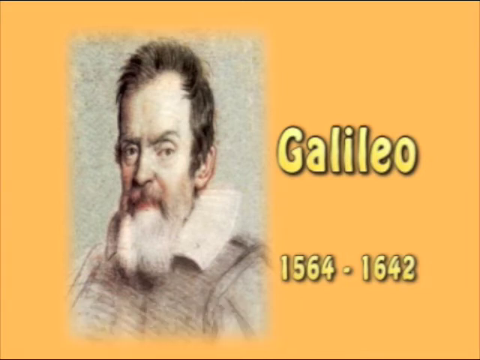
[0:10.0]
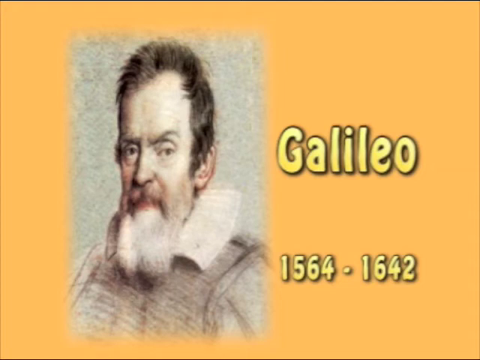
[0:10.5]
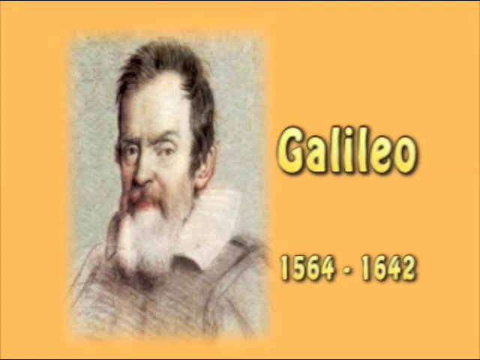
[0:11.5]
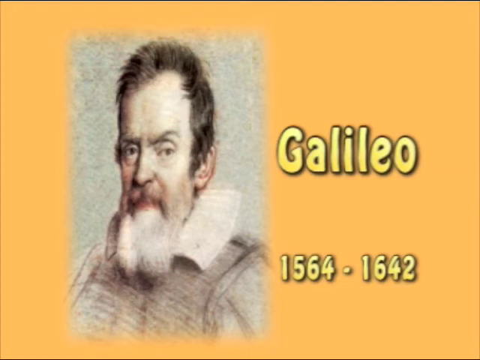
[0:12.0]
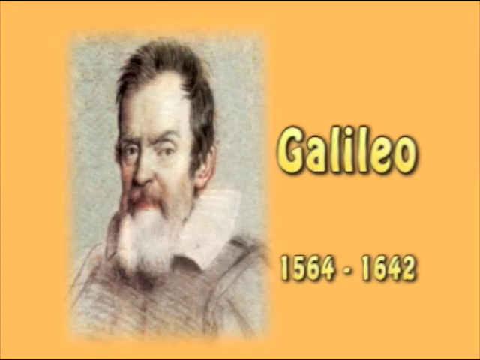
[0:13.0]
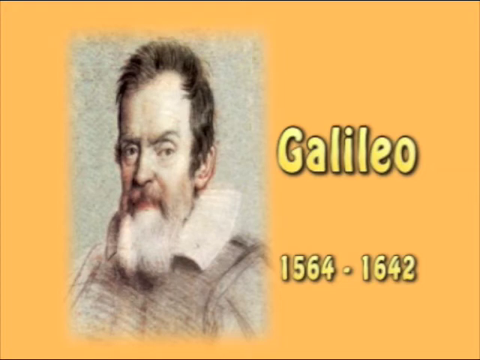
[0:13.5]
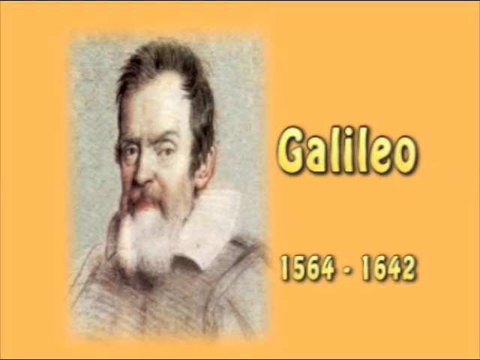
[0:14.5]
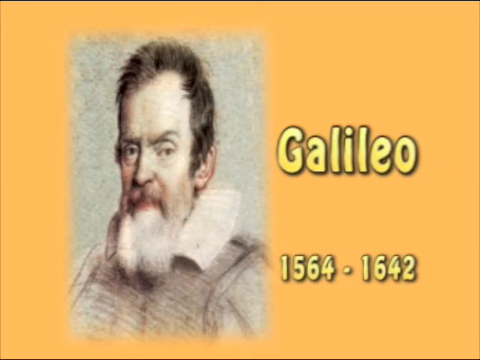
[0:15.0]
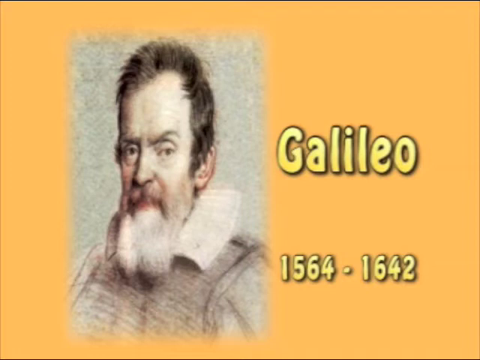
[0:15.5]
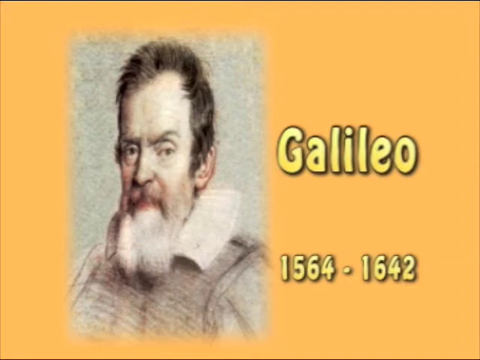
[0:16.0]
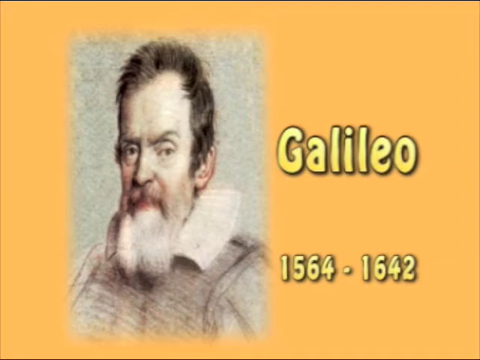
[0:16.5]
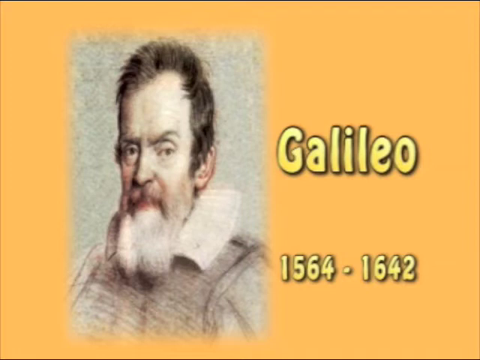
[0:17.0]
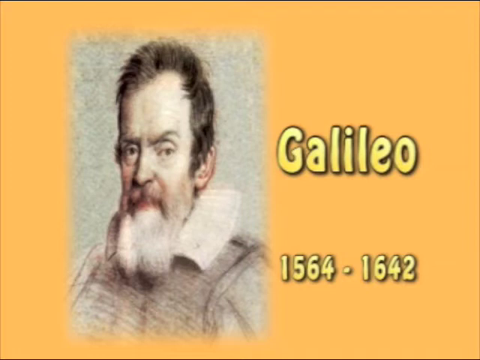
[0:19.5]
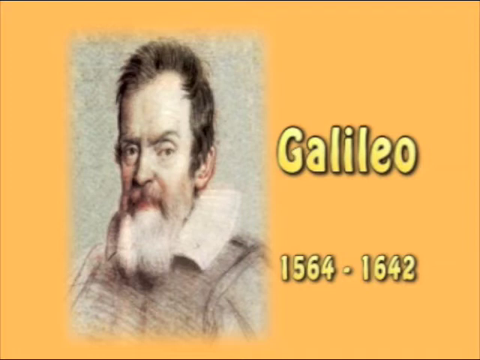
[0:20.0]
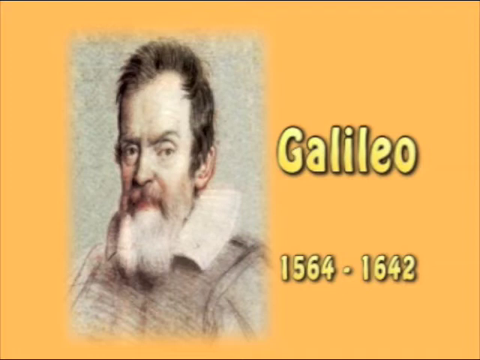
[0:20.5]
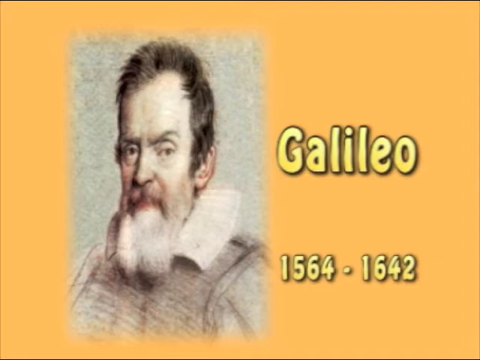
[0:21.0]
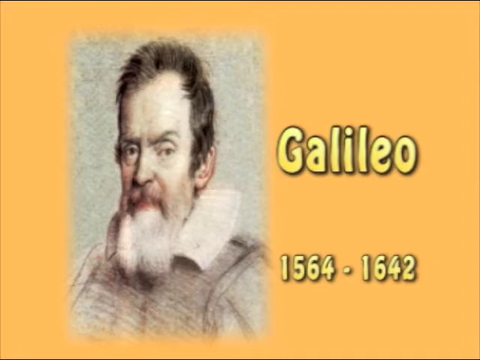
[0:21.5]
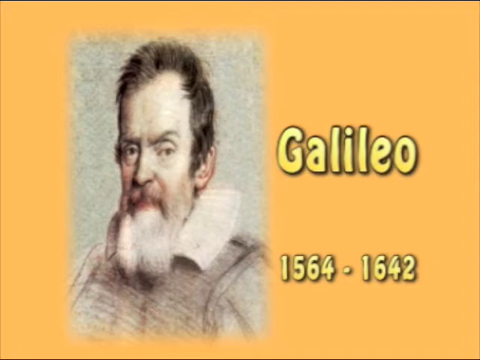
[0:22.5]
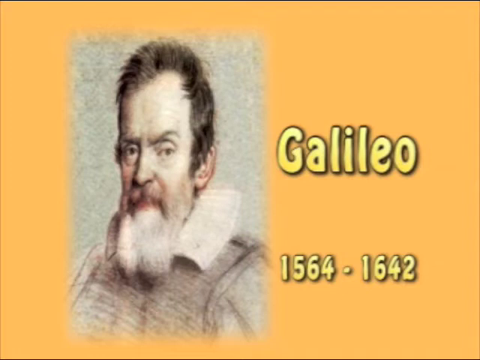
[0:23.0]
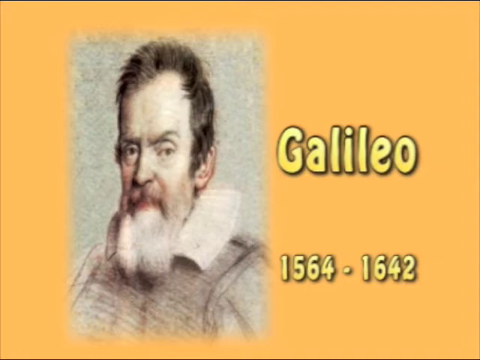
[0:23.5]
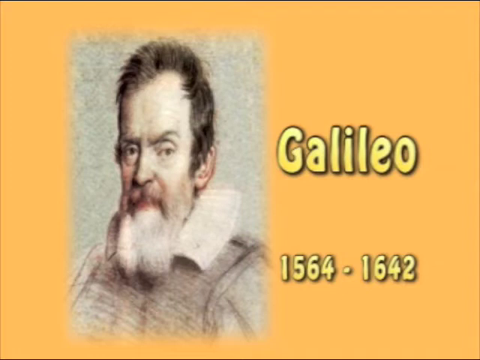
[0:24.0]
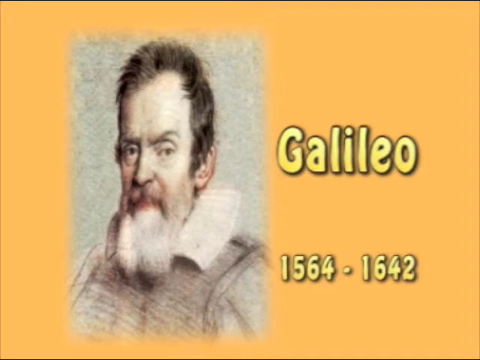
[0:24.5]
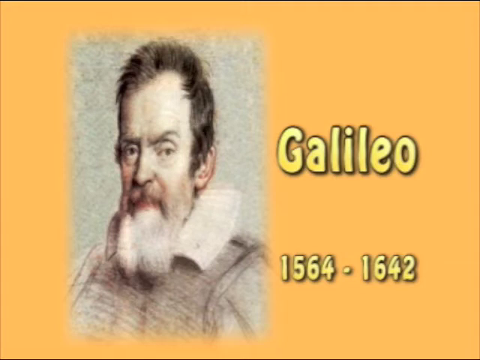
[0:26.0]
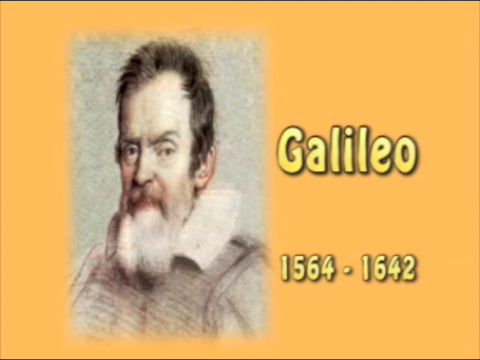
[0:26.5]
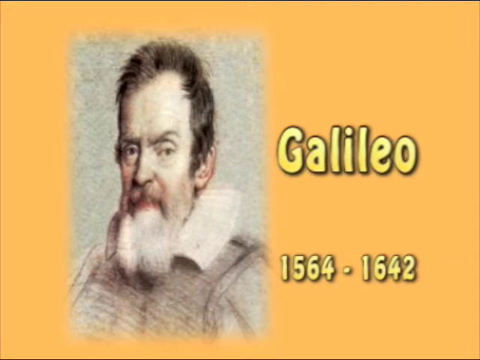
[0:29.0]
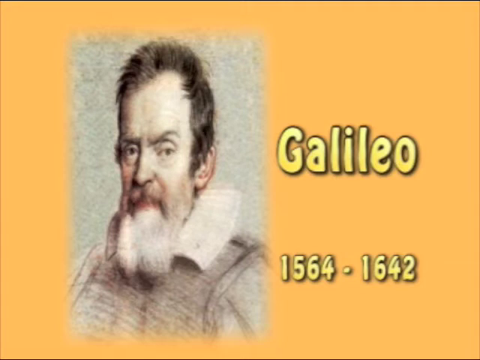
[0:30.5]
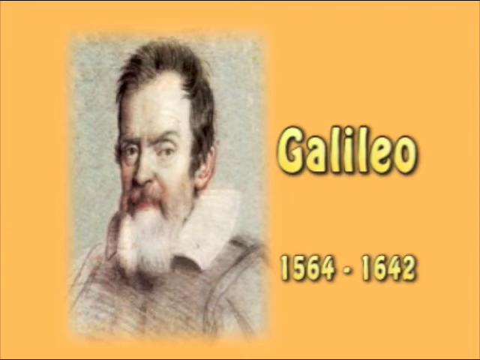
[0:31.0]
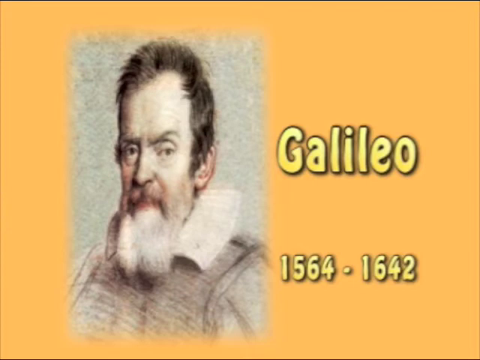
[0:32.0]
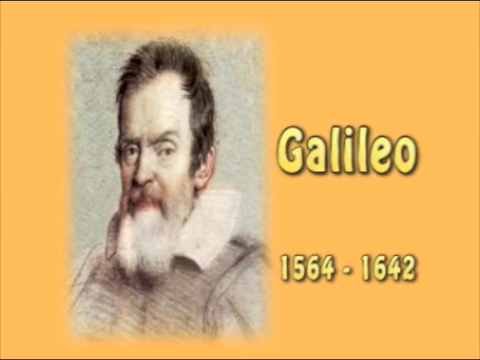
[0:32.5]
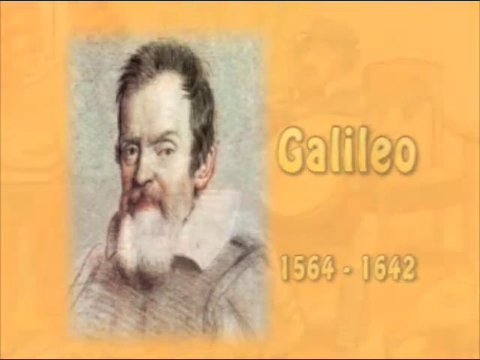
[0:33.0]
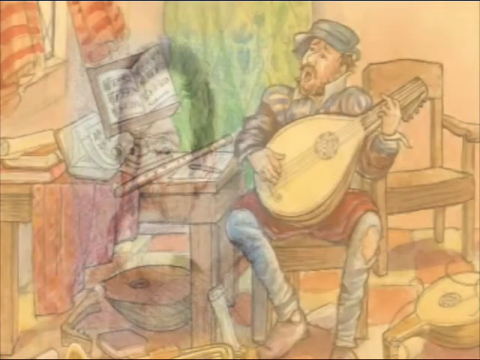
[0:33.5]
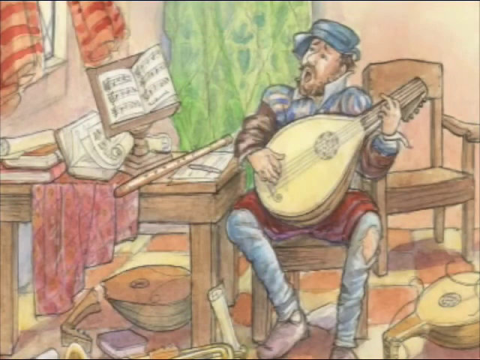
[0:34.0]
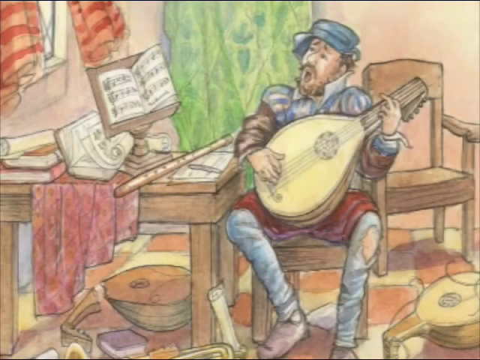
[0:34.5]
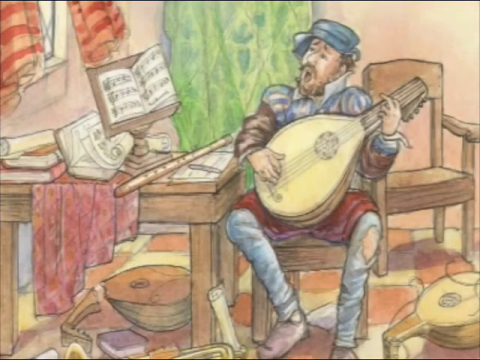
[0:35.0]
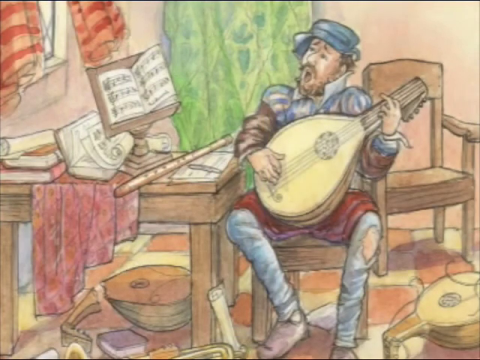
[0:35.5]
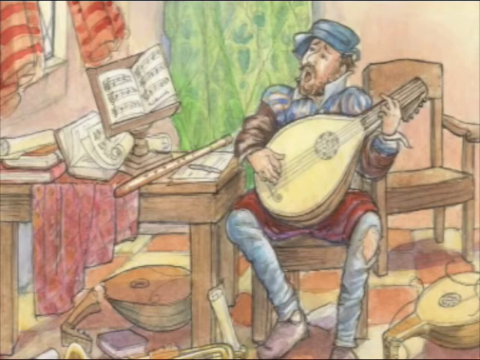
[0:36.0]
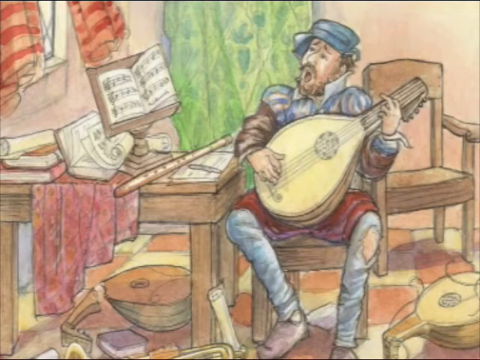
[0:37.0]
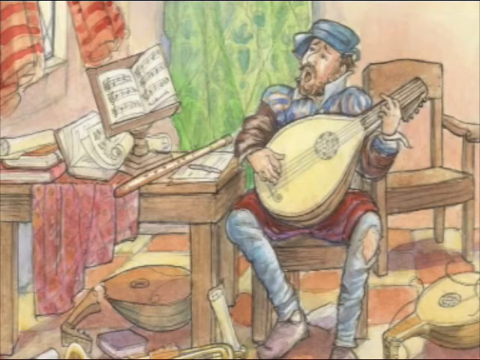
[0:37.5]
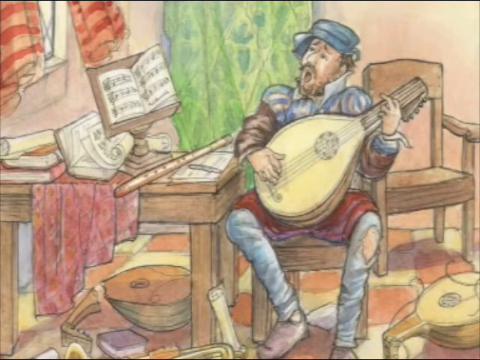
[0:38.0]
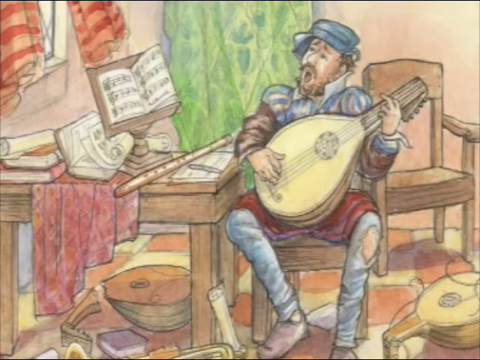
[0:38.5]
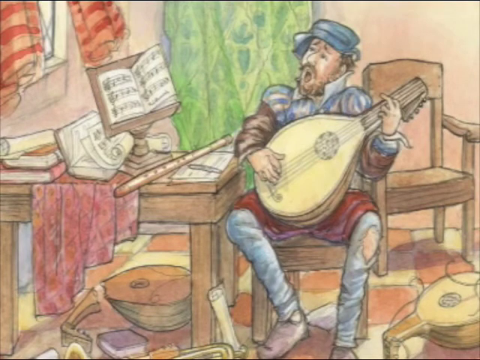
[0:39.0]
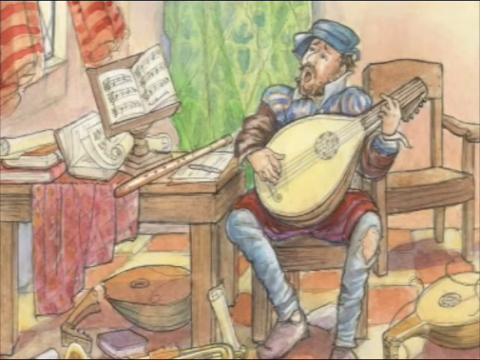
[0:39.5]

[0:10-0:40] On a yellow-orange screen, a portrait of Galileo appears on the left, rendered in various shades of beige and brown. He is turned slightly to the left, with short brown hair, a receding hairline, furrowed eyebrows, and brown eyes looking straight ahead. He has a long graying beard, an oversized collar, and beige-to-brown clothes. To the right, "Galileo" appears in a shiny gold color, with his birth and death years, 1564 to 1642, underneath; this fades away. Black at the bottom sort of fades out toward the top of this line. The image then flips to an animated picture of him sitting at a desk holding an instrument, wearing a hat, with his mouth wide open. A piece of wood props up a music book. Other instruments are thrown across the floor. There is a window with curtains, and several books are piled up on the table or desk beside him.